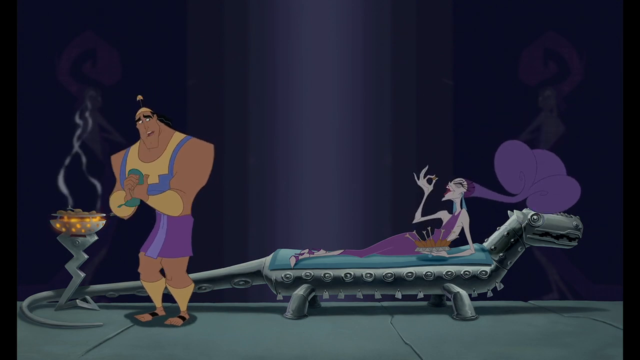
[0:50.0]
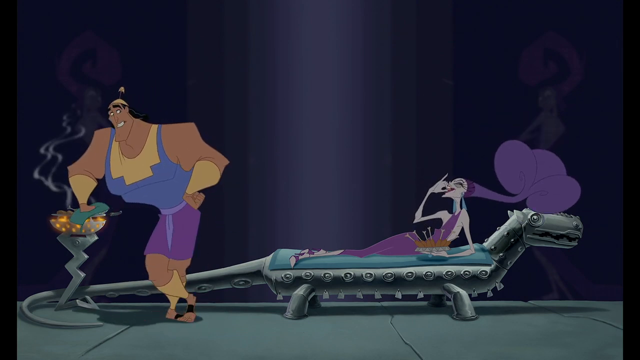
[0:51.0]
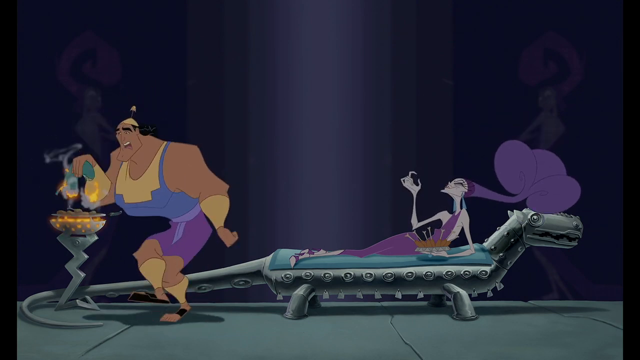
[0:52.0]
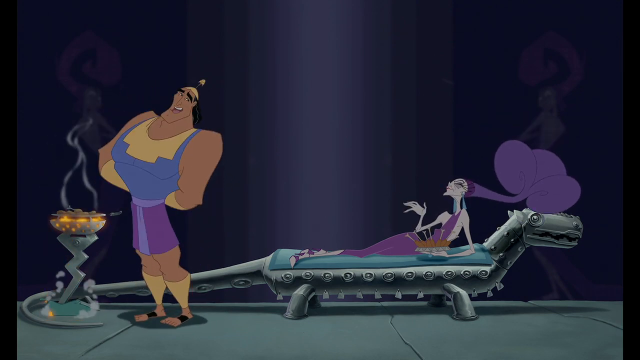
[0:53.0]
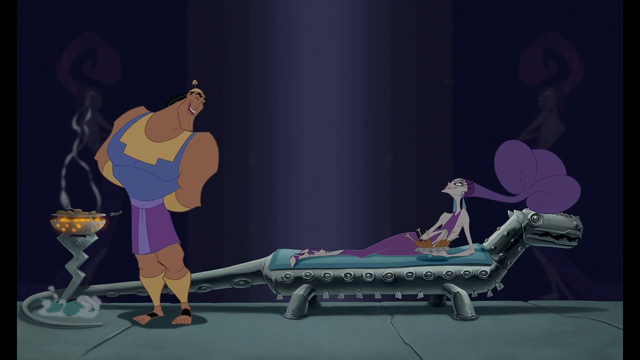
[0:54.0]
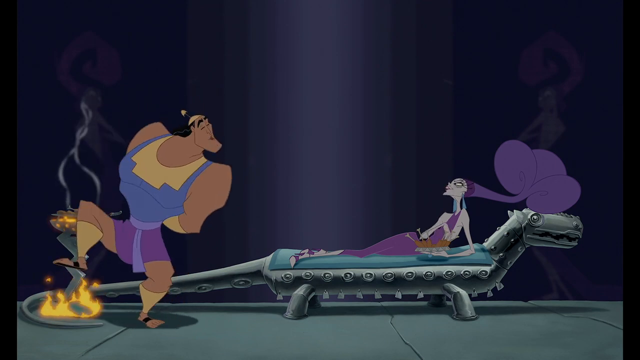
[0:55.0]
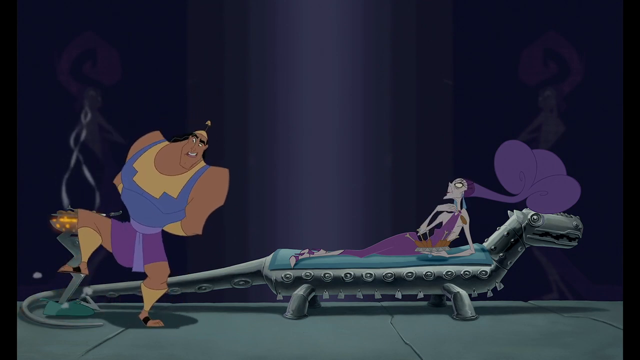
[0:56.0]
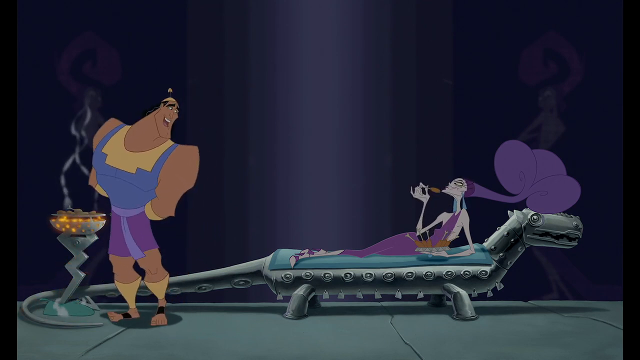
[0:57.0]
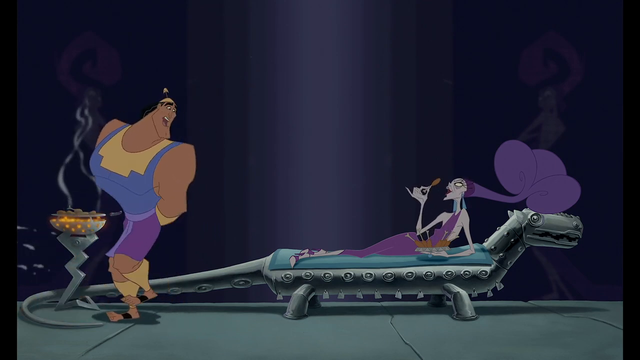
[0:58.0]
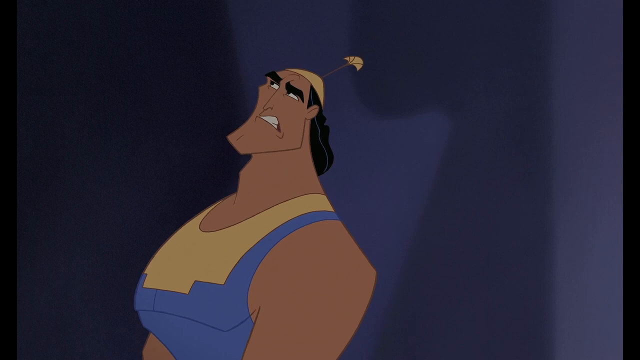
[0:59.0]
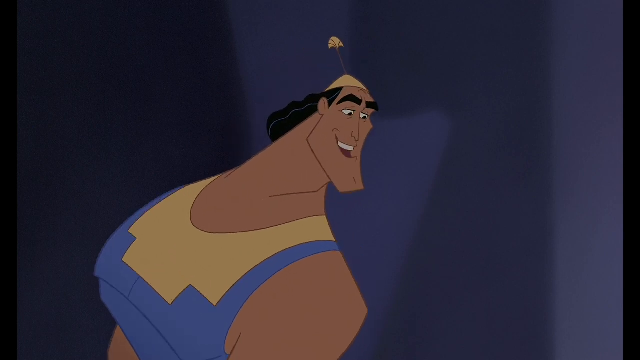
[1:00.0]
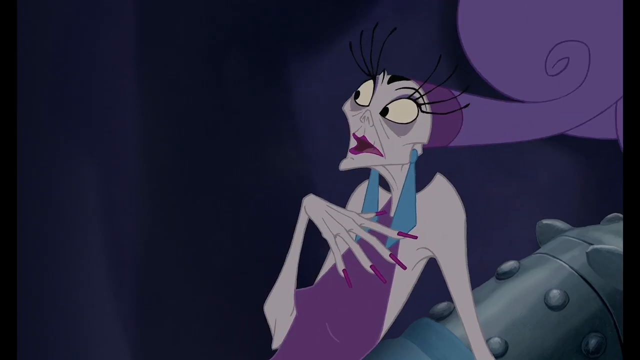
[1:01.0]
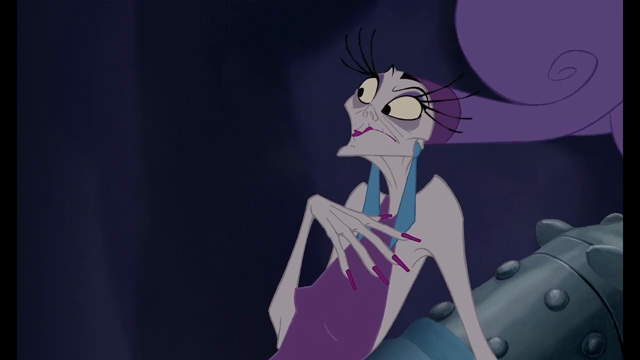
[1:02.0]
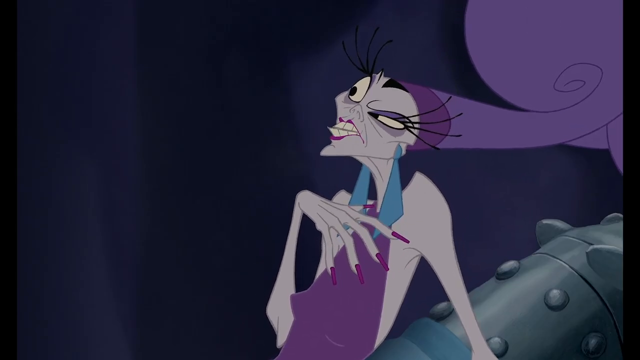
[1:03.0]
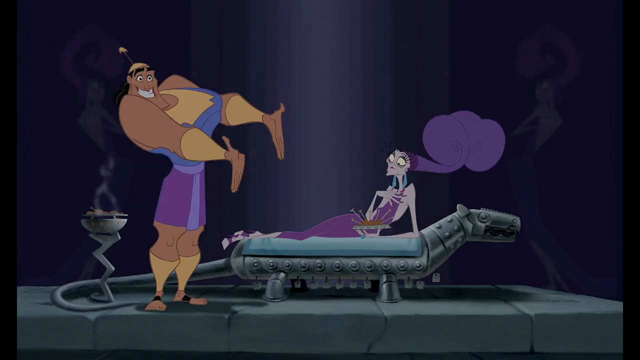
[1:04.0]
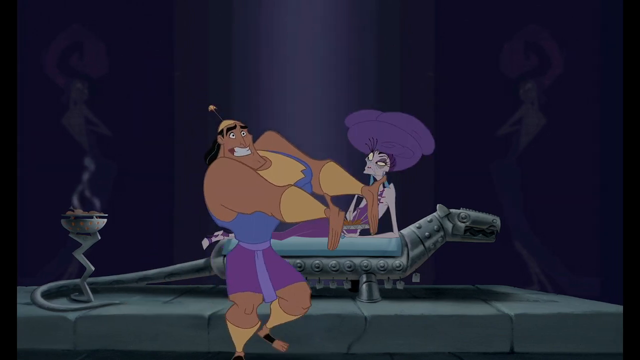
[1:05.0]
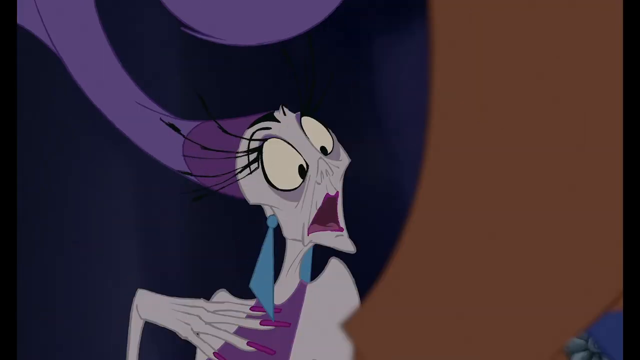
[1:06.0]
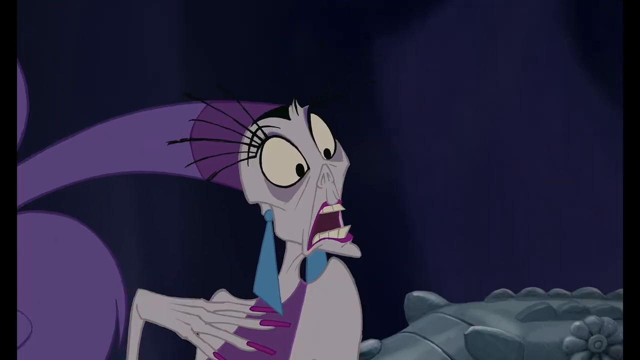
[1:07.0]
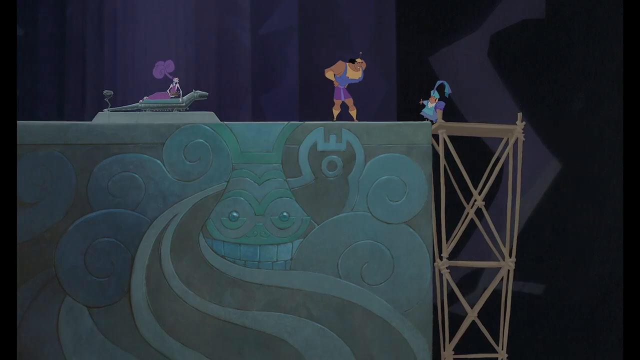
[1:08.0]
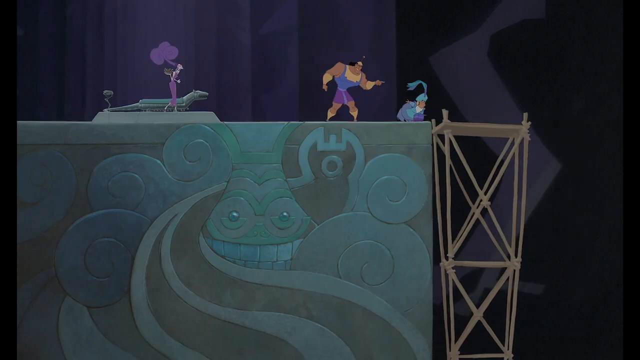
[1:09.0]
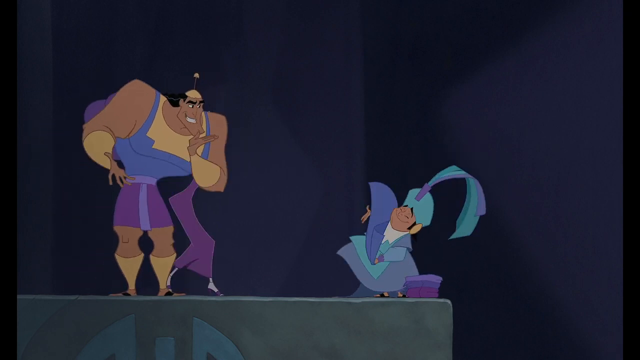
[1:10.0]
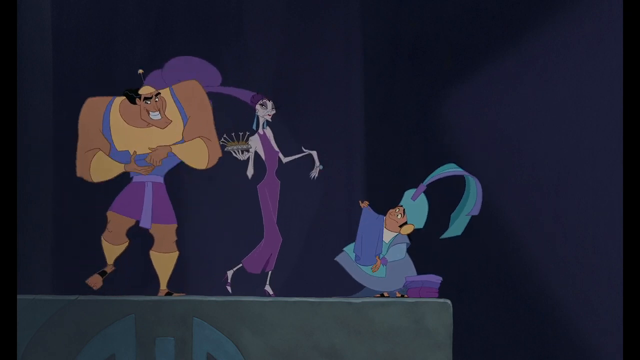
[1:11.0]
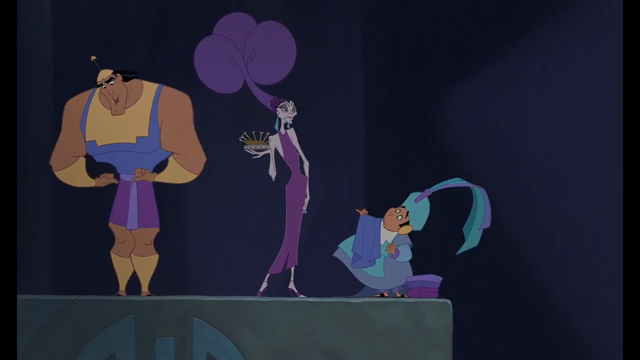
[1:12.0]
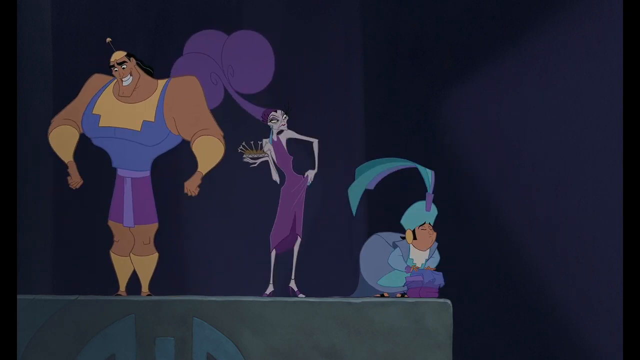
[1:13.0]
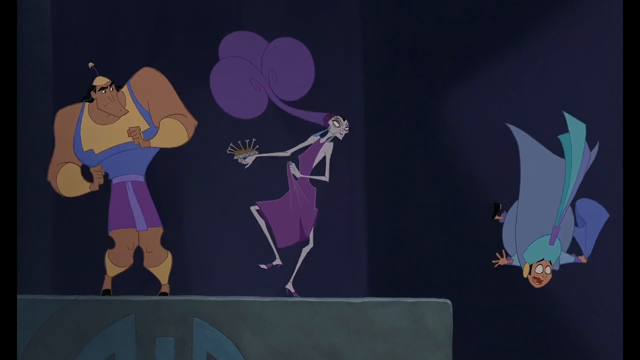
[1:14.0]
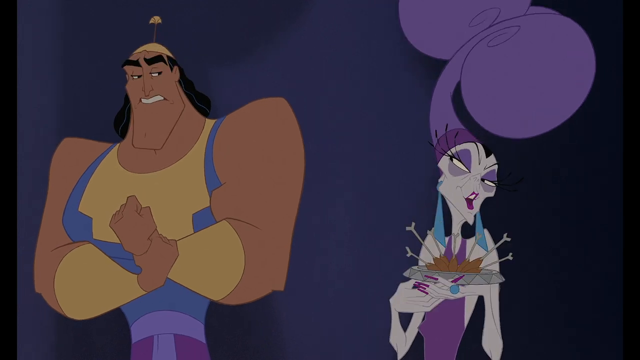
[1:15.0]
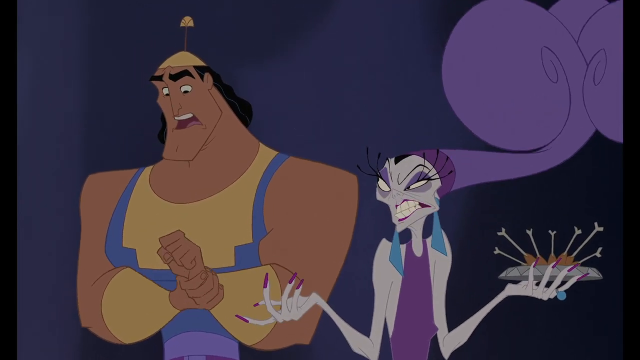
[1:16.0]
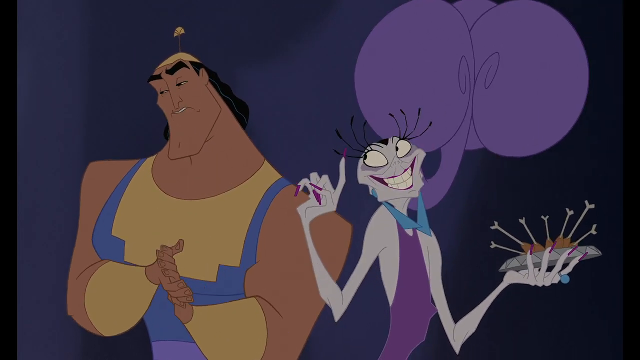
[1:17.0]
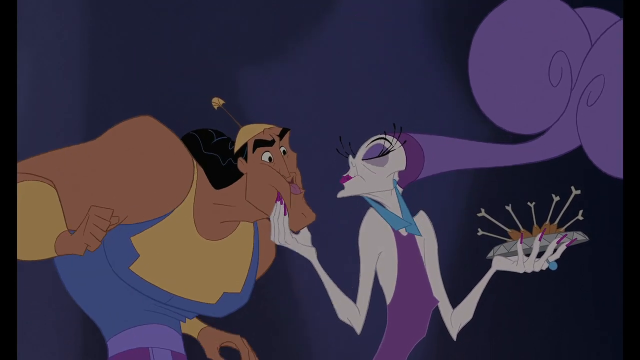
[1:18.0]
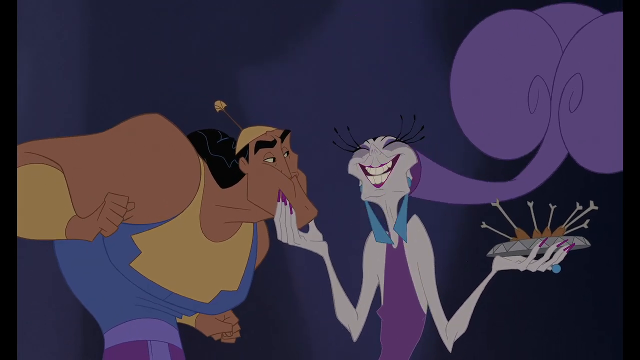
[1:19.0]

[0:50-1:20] An animated scene shows a large, muscular soldier being treated like a servant by a thin, frail, elderly queen who has taken rule after the former ruler's death. He seems to try to act brave and not show he is scared. He almost burns himself, and then tries to leave, but the woman stops him and tells him he must stay and be her servant until she says he can go. She tells him to hurry back because she wants more chicken wings, cooked right this time. He goes back to cooking, stuck with her out in the middle of nowhere.